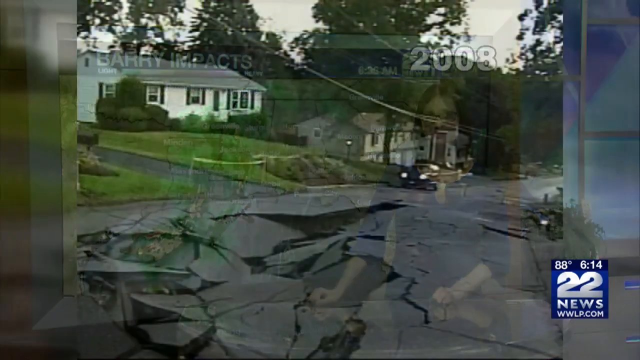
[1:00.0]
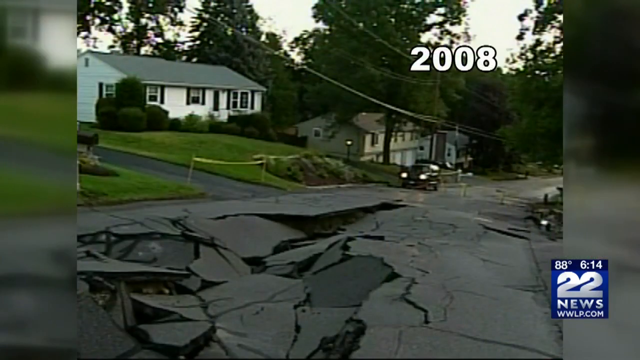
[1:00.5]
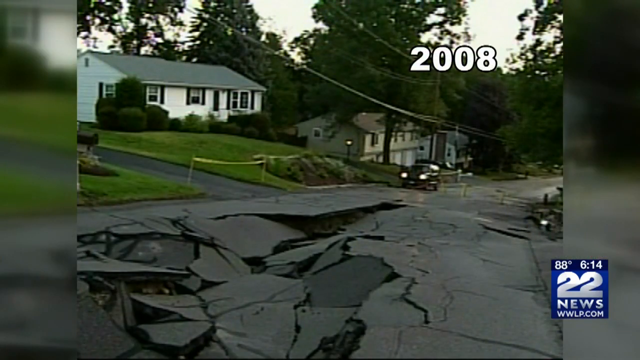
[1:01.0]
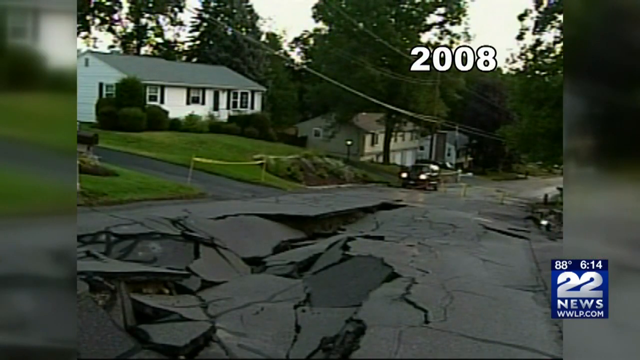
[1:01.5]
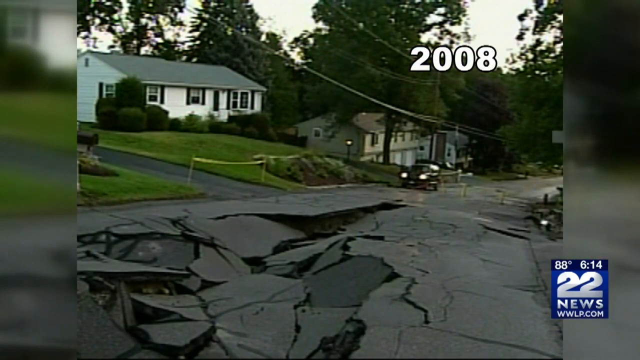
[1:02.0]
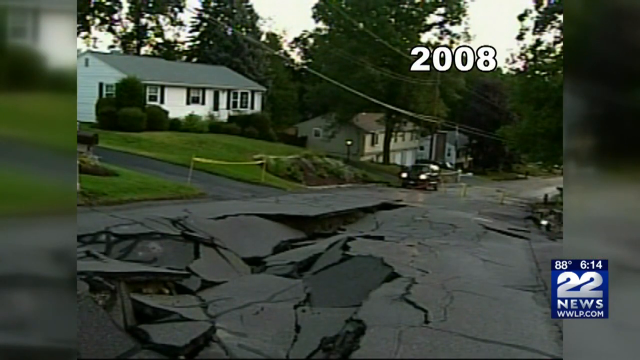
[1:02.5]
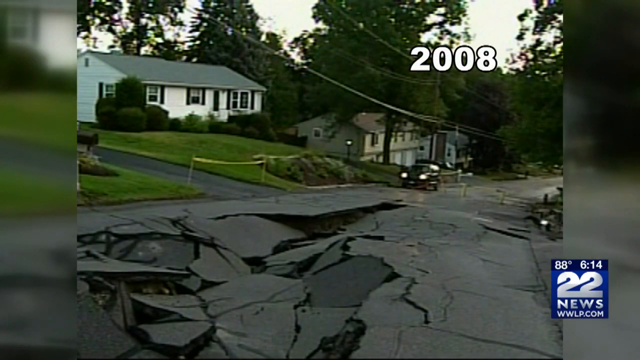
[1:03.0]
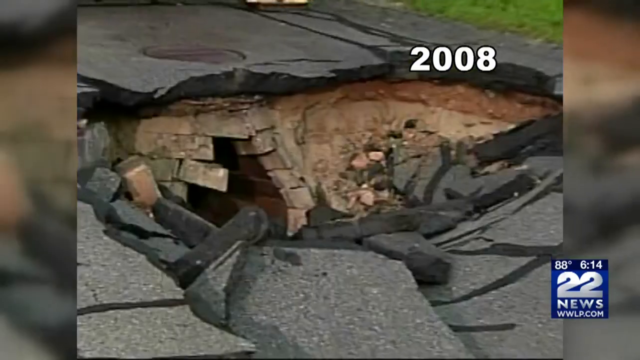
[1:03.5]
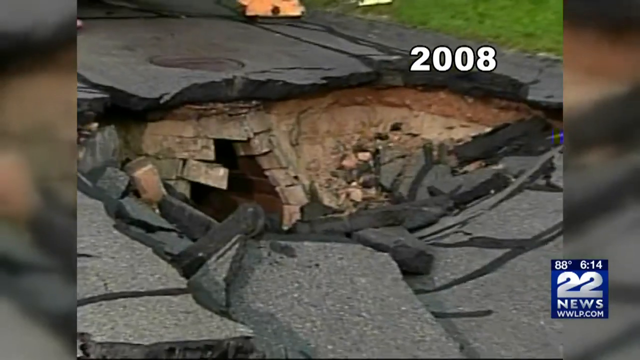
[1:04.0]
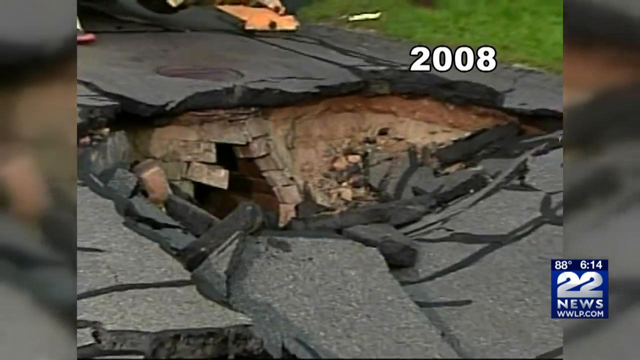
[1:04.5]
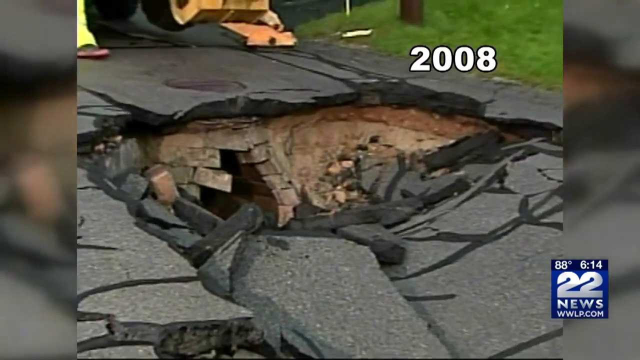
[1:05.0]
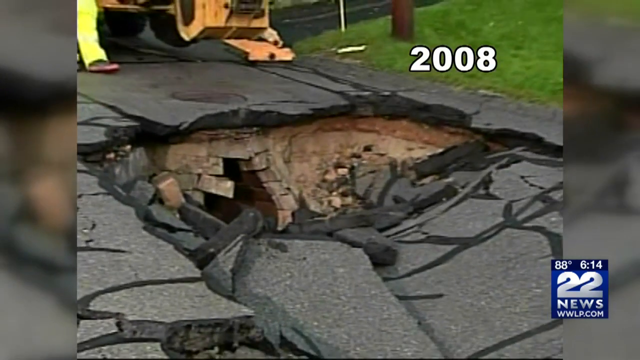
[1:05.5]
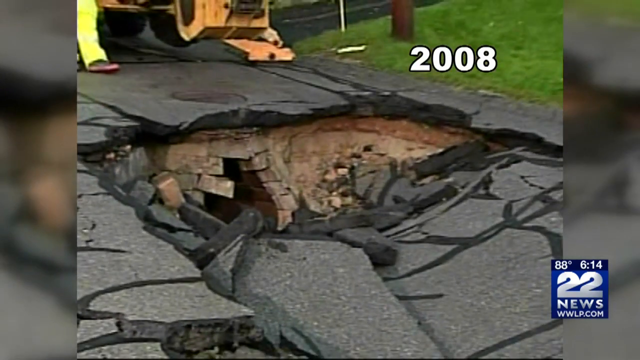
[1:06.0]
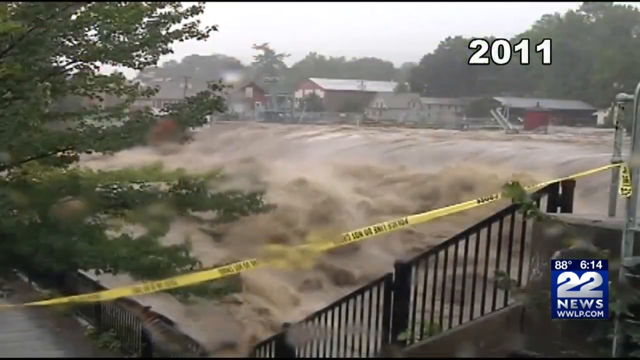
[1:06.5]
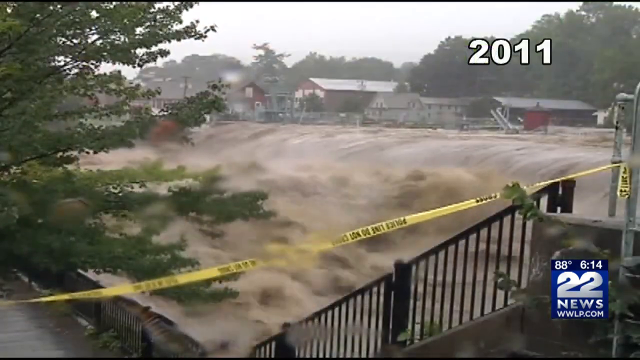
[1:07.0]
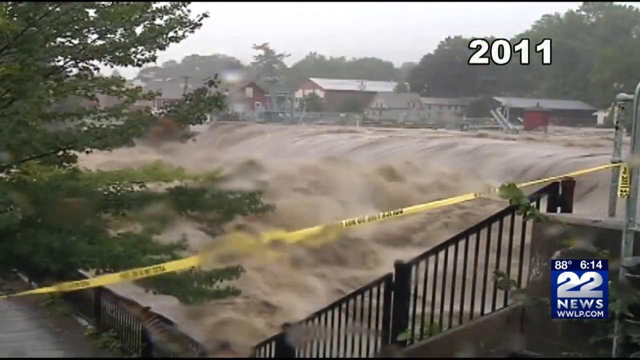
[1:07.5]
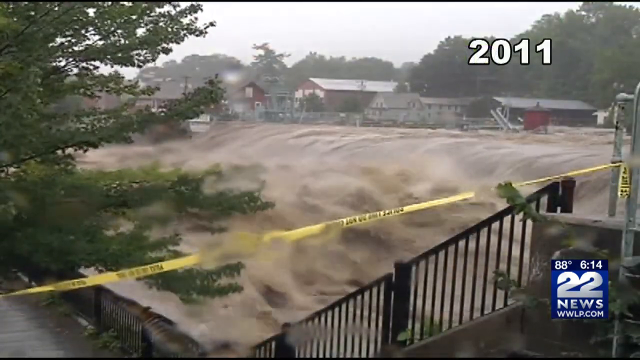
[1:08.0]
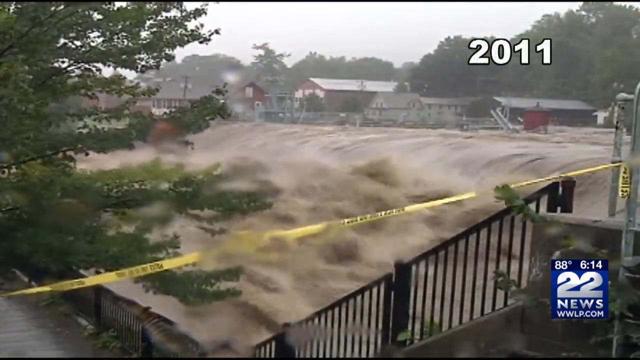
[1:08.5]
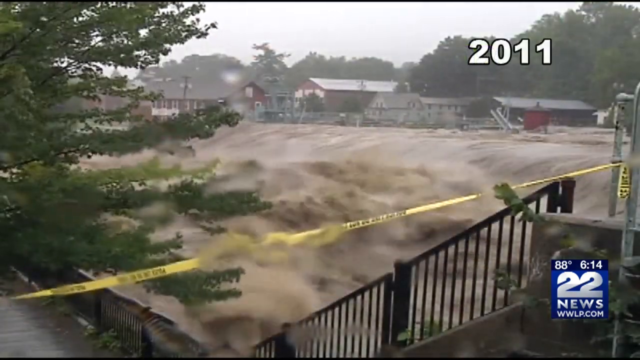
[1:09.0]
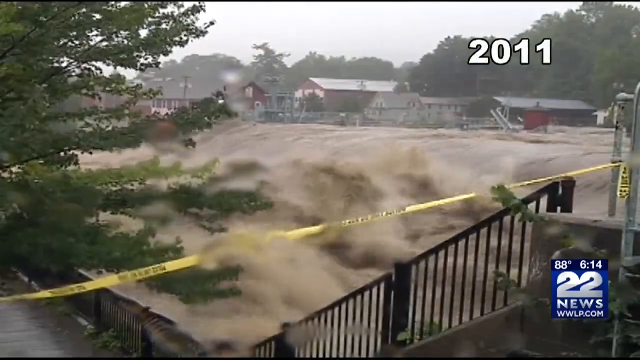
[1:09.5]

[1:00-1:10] Flood-damaged areas are shown, with floors broken and seriously damaged. There is a car and white-painted houses. A high, very strong current with strong waves is shown in footage from 2011, and some houses are submerged in the floods. Footage from 2008 shows a floor and road destroyed by a hurricane. A white house has a car beside it with its lights still on, and a very strong current of water flows as some houses are submerged.